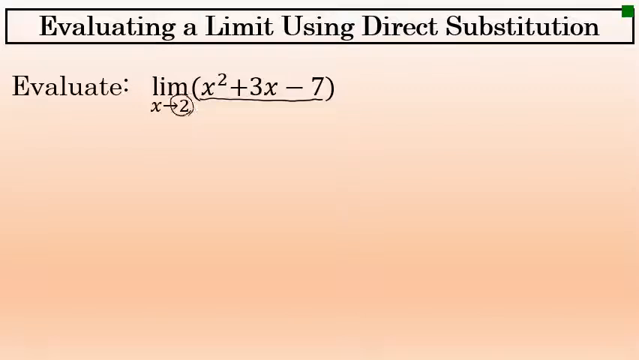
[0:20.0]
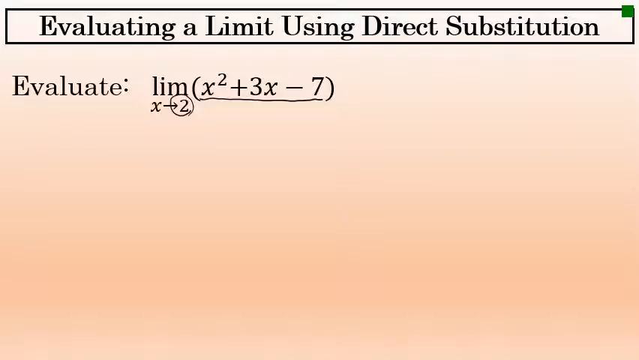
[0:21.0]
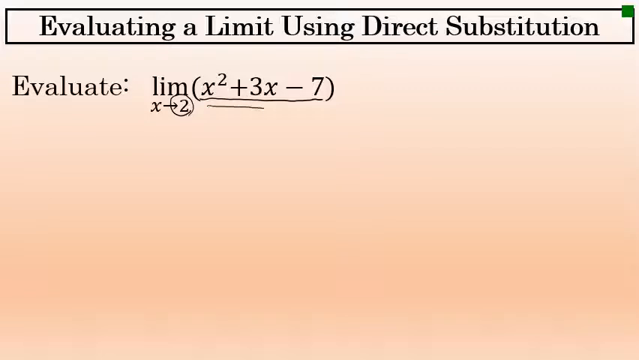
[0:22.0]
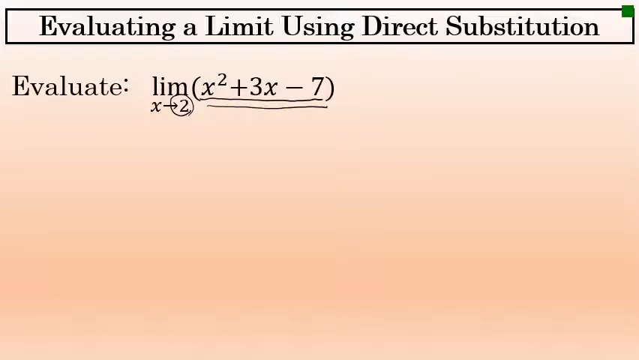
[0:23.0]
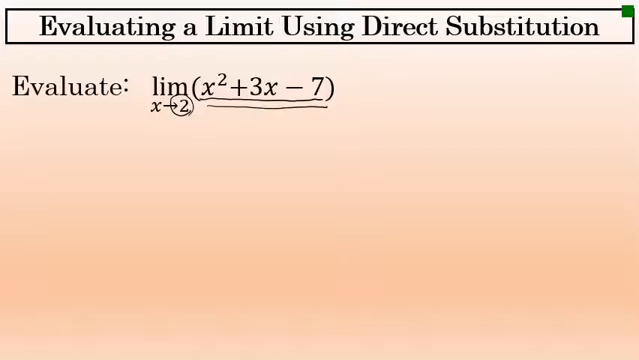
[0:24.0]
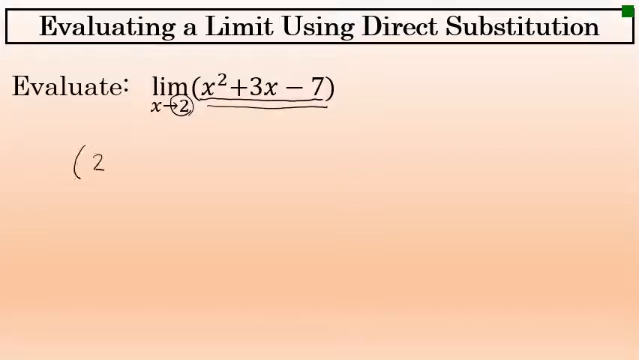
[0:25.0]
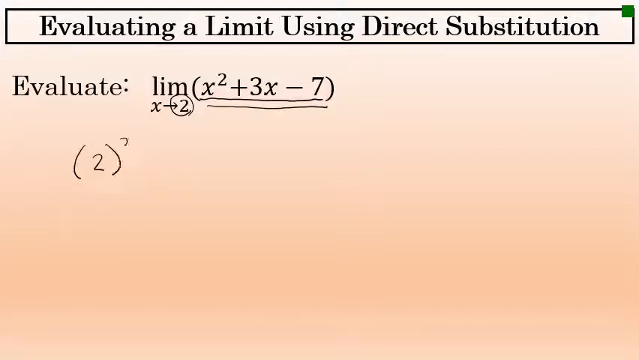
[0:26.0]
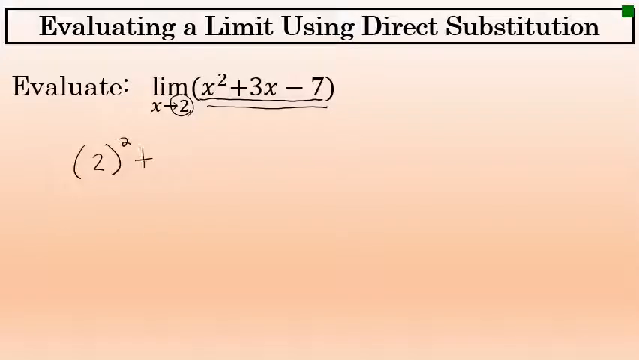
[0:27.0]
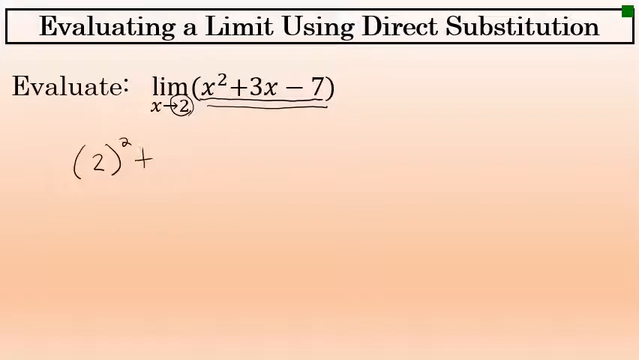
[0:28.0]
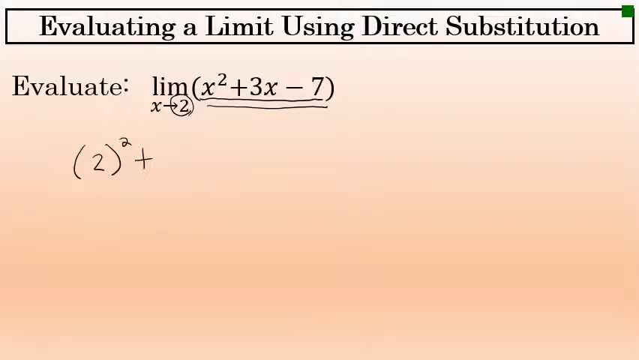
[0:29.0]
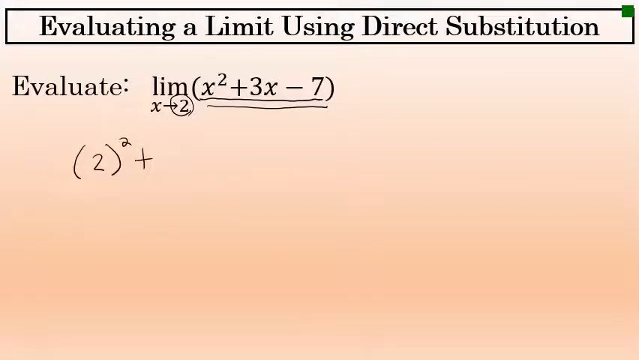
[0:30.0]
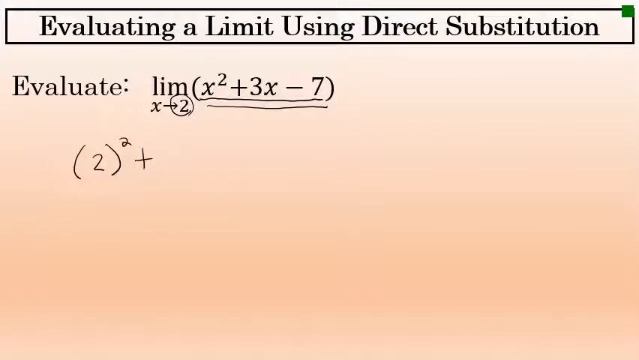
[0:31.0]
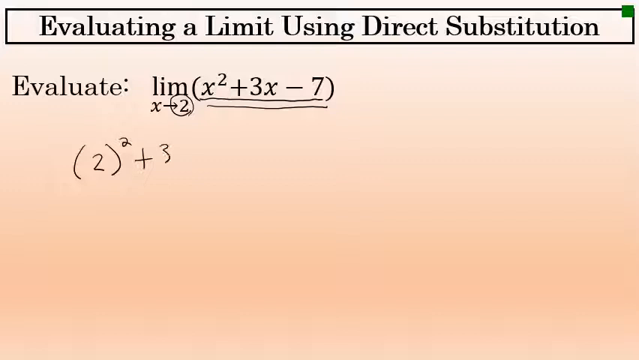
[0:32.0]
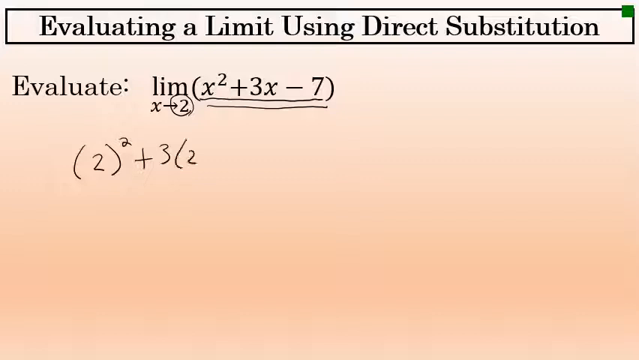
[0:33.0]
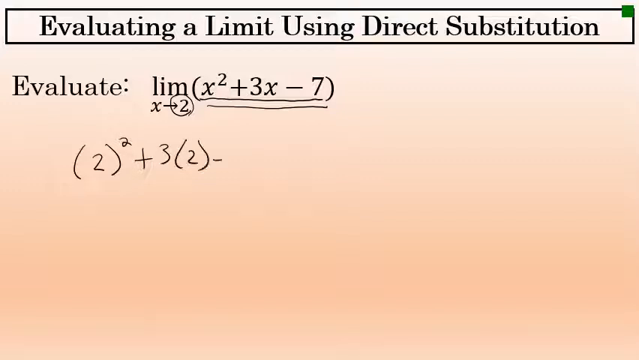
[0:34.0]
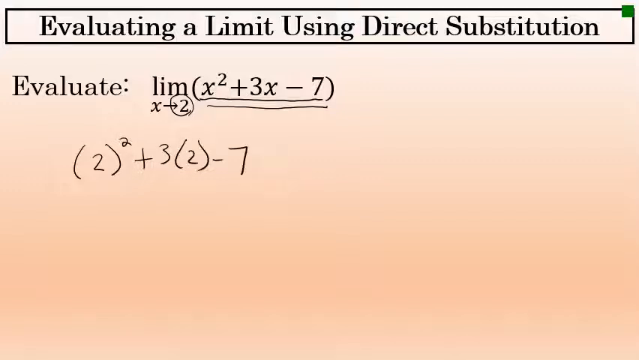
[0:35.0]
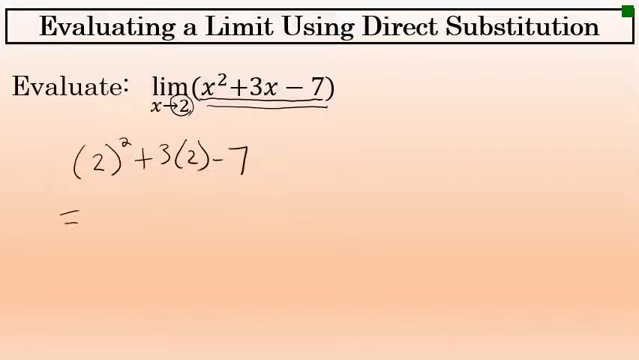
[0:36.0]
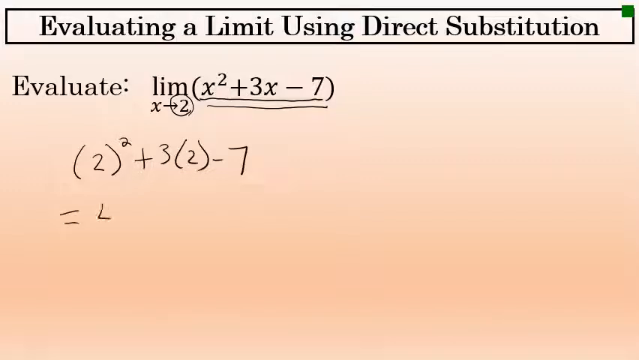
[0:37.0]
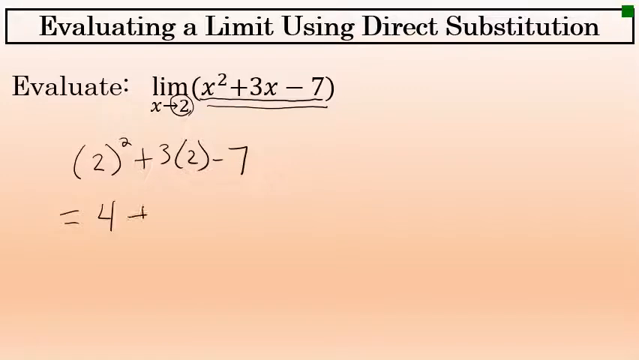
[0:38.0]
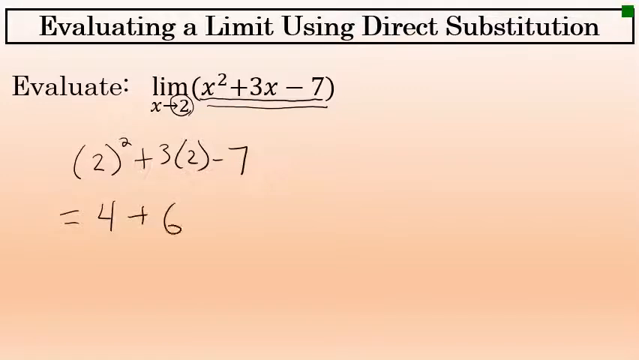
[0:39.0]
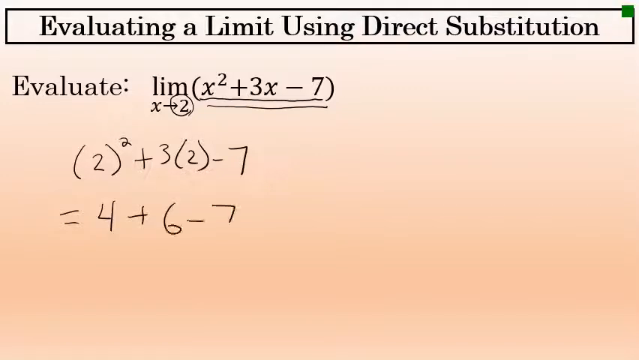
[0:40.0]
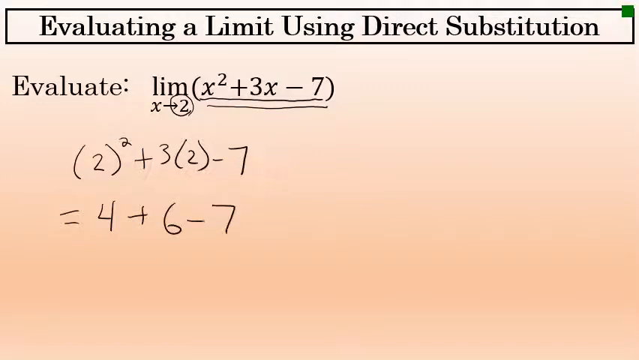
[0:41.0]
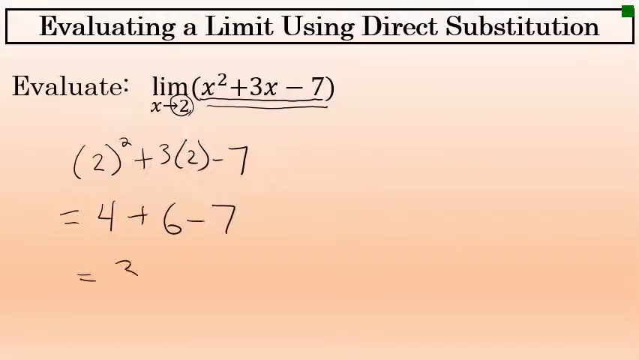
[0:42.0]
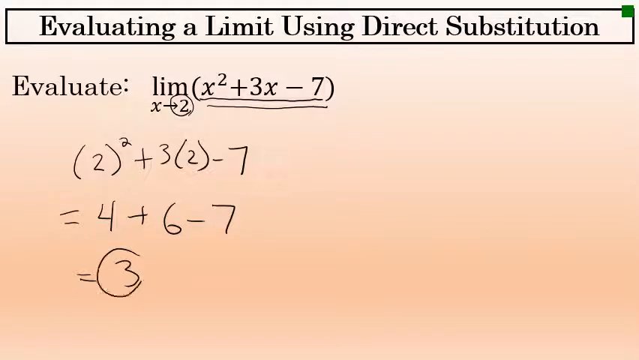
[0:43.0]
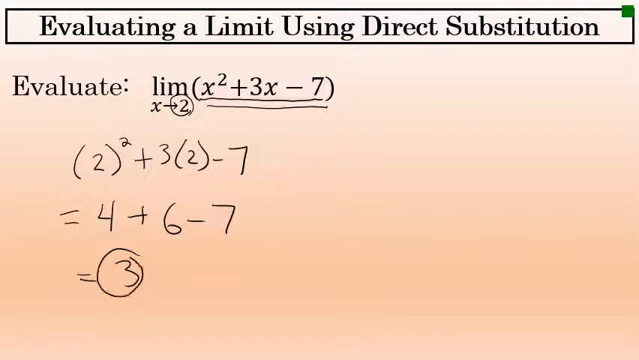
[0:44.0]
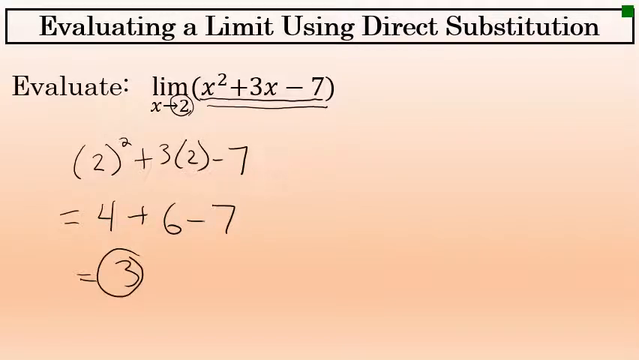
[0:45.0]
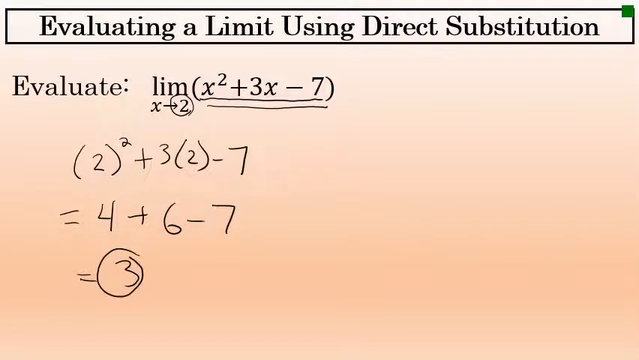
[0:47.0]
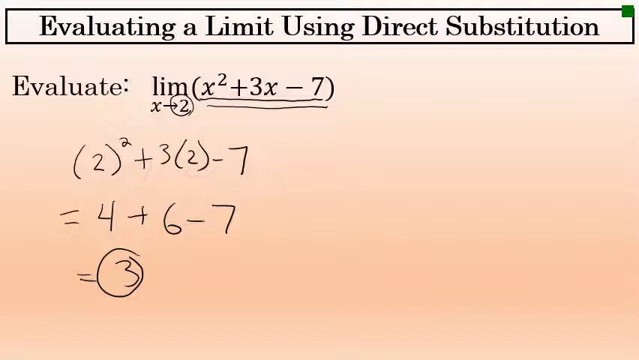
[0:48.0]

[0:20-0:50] At the top is written "evaluating a limit using direct substitution", in a blank box, and in the top right corner there is a smaller box. Below is written "evaluate LIM x2 + 3x - 7", with an x and an arrow just below the LIM. The equation is underlined with two lines, and the 2 written at the bottom is in a circle, all in black. Further down, the working substitutes 2 into the expression, giving 4 + 6 - 7, which equals 3. The equation is being solved on the left side, going down toward the bottom of the page.